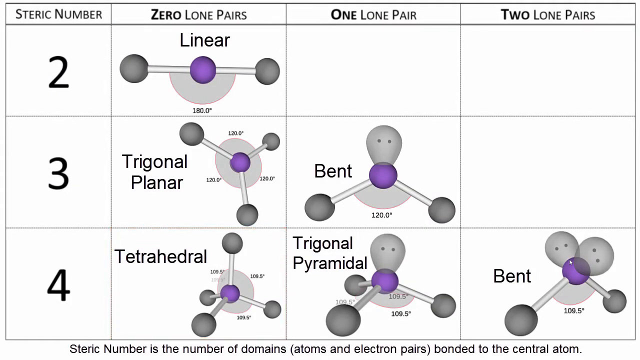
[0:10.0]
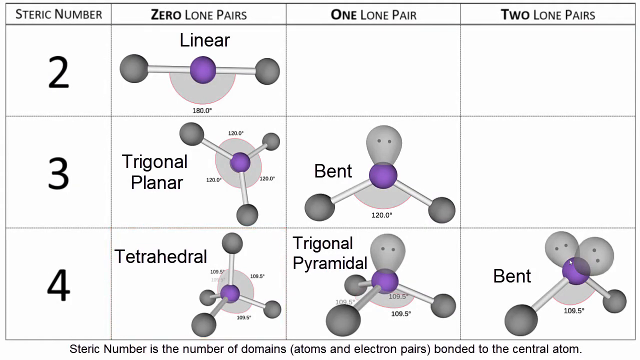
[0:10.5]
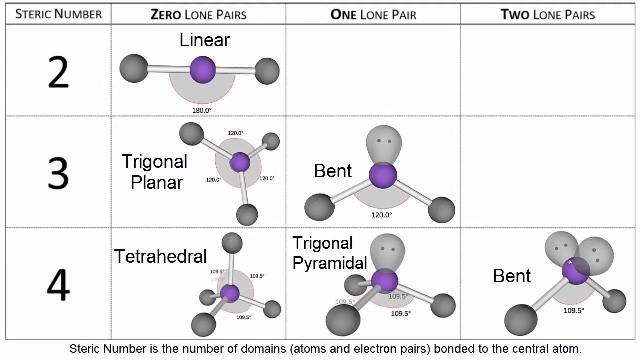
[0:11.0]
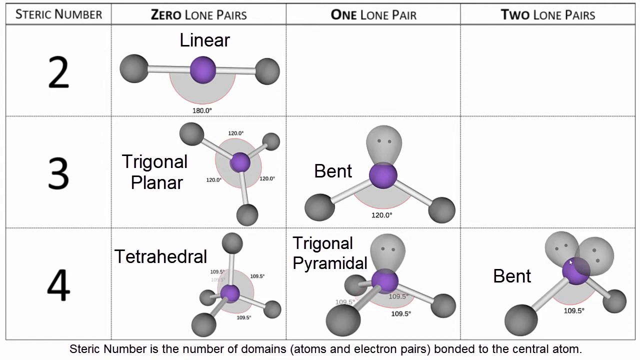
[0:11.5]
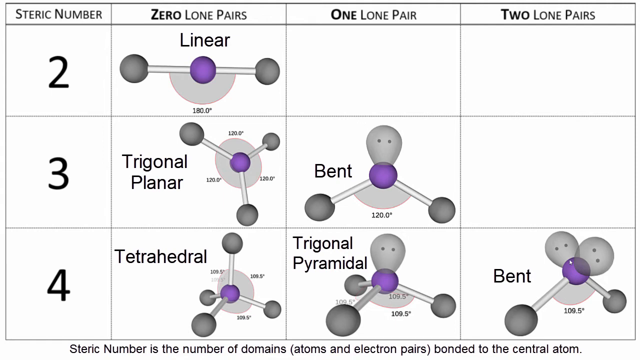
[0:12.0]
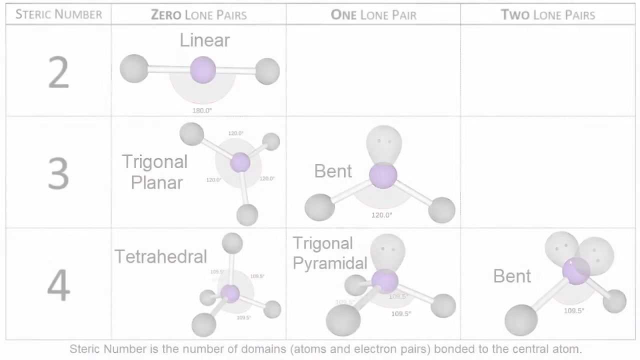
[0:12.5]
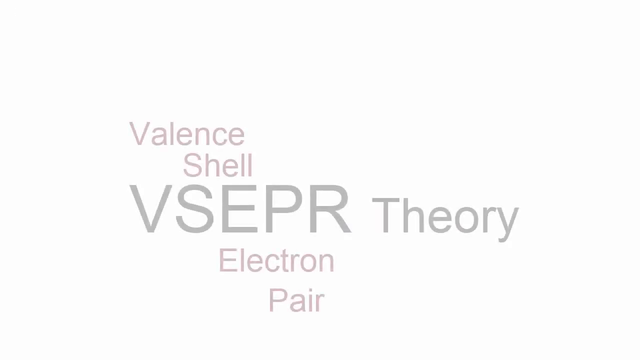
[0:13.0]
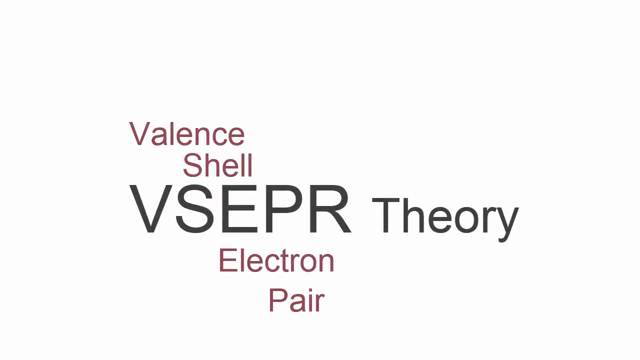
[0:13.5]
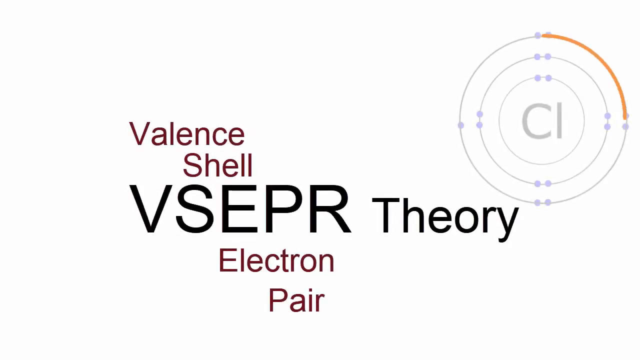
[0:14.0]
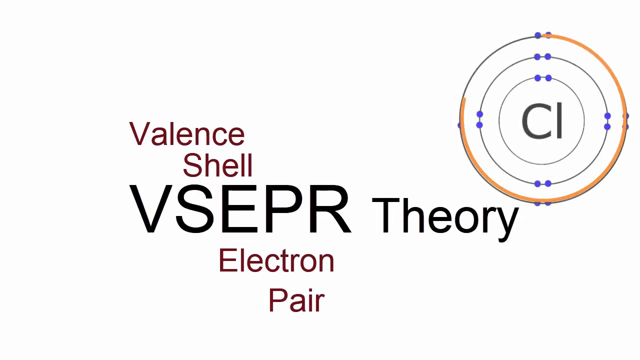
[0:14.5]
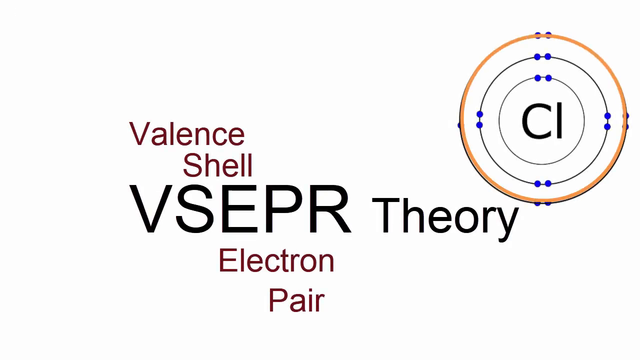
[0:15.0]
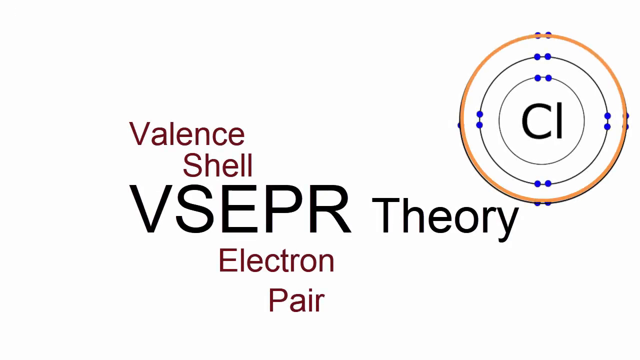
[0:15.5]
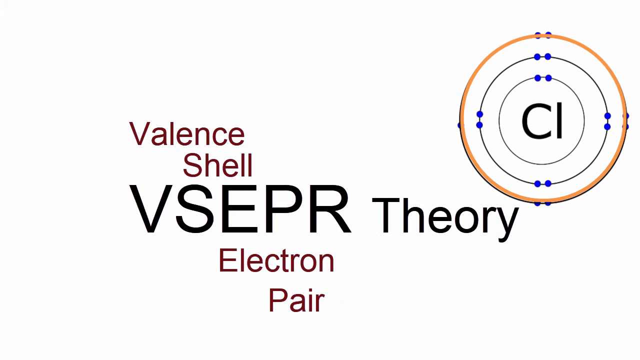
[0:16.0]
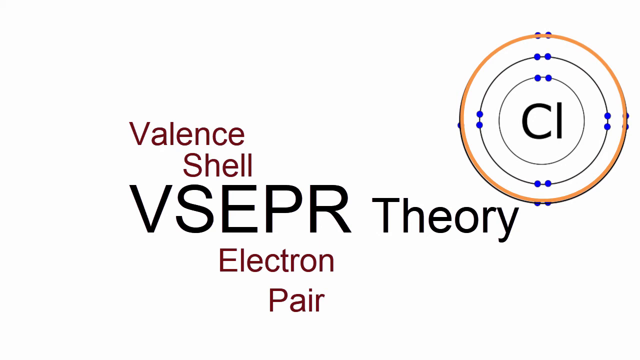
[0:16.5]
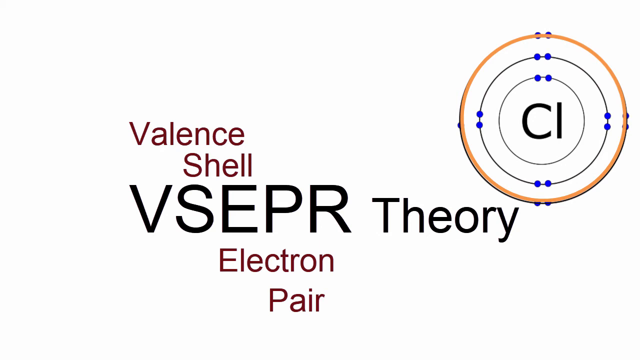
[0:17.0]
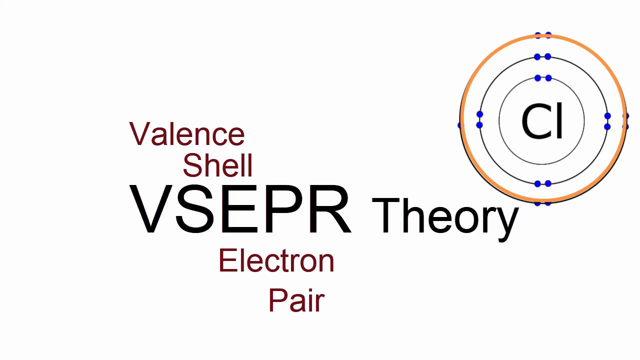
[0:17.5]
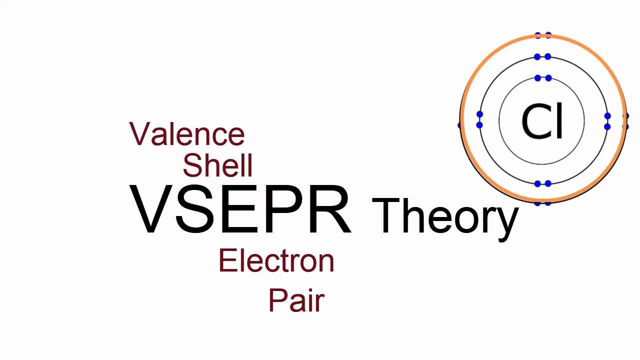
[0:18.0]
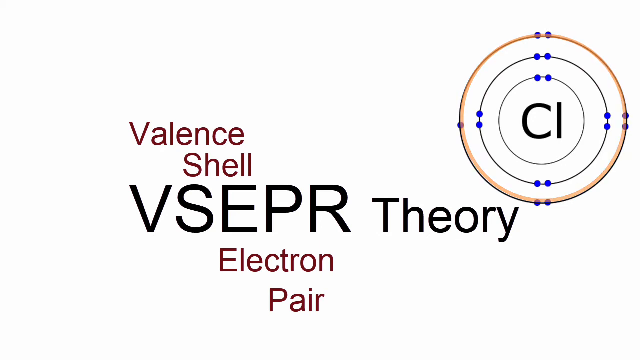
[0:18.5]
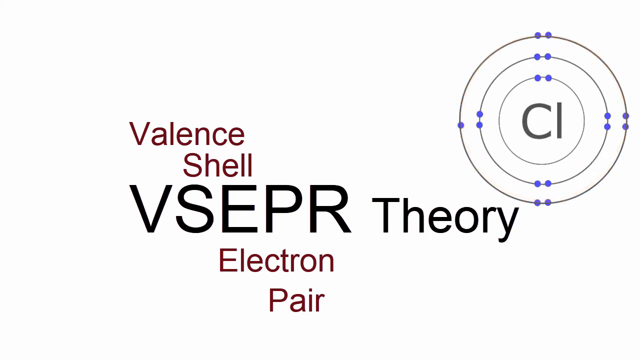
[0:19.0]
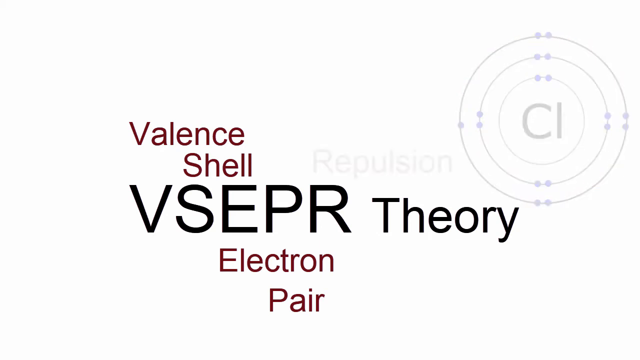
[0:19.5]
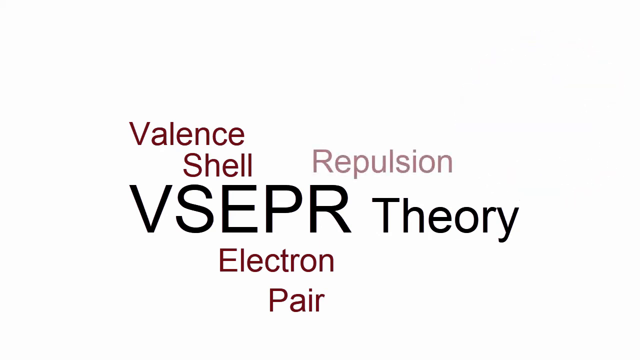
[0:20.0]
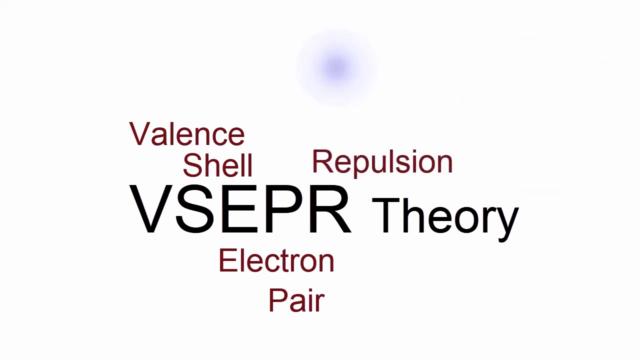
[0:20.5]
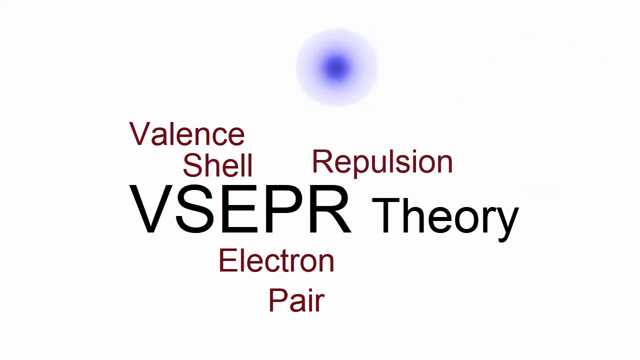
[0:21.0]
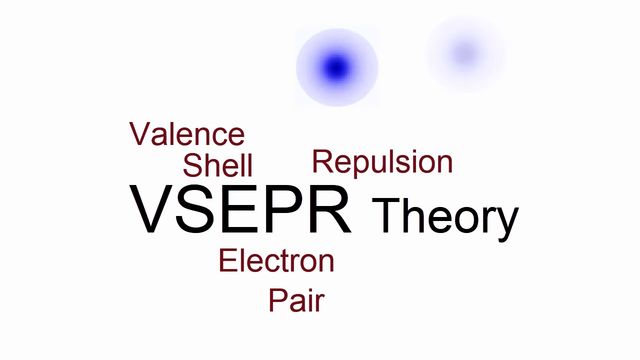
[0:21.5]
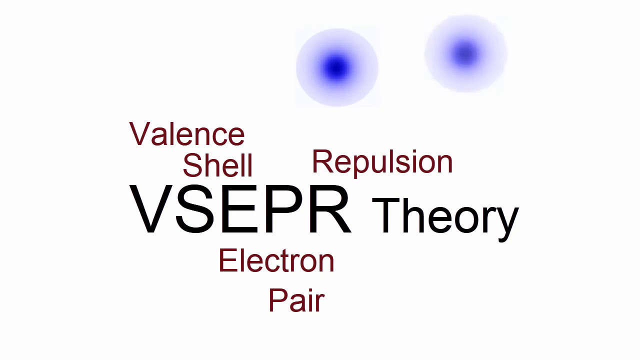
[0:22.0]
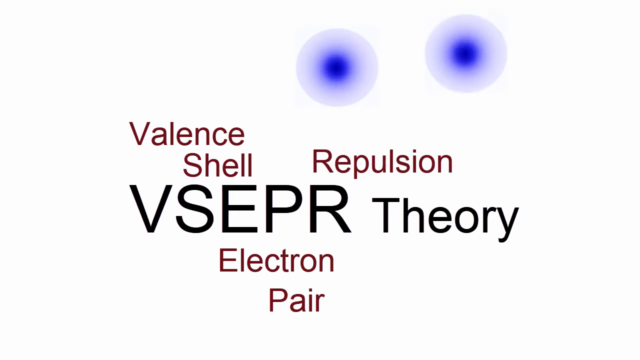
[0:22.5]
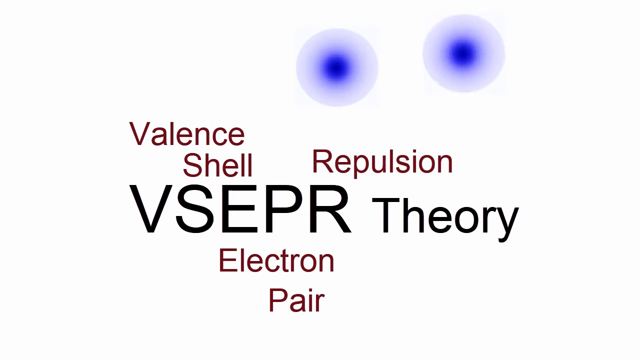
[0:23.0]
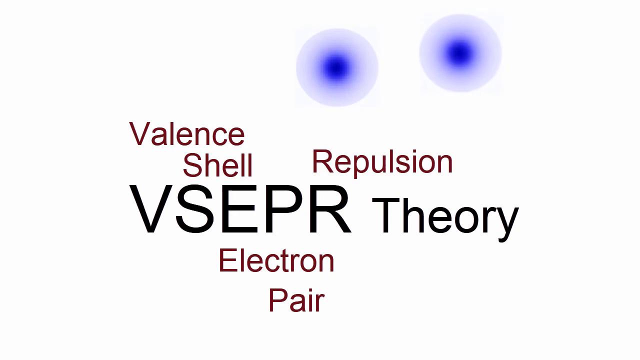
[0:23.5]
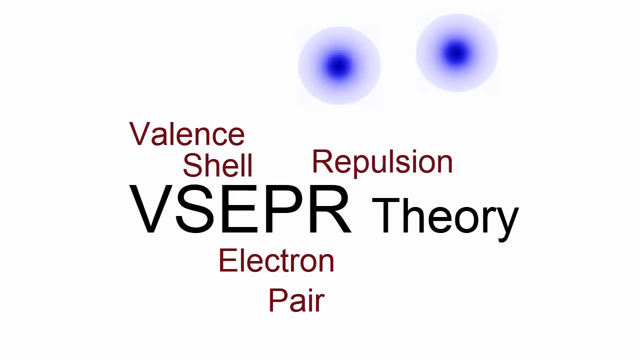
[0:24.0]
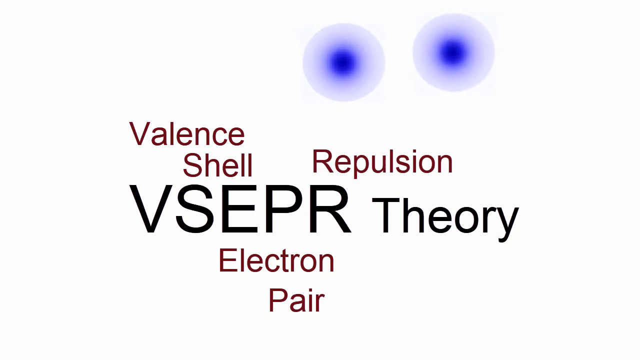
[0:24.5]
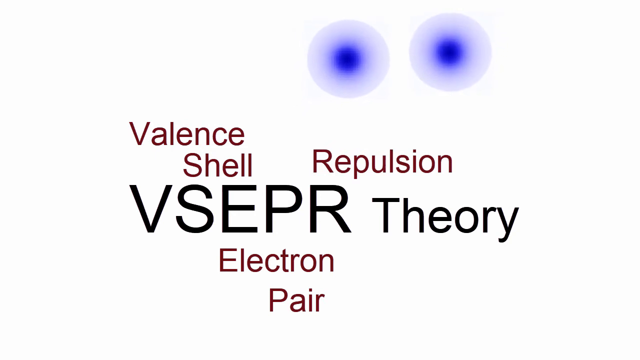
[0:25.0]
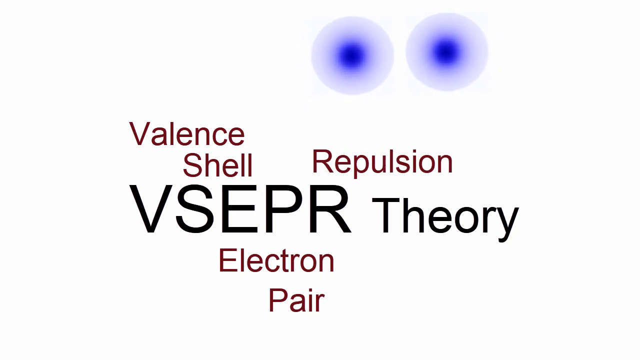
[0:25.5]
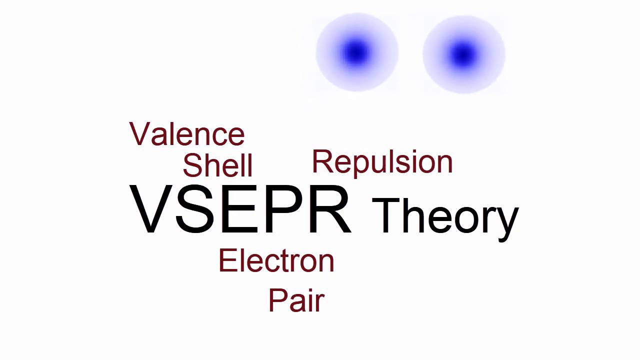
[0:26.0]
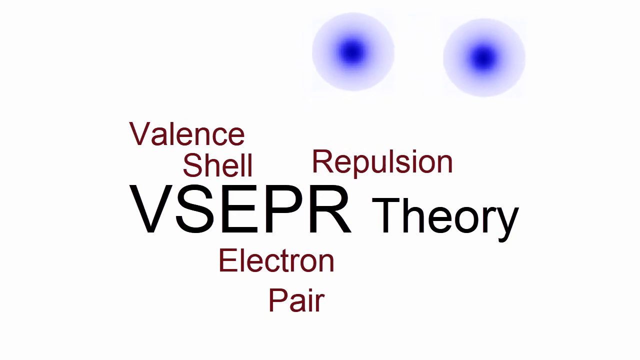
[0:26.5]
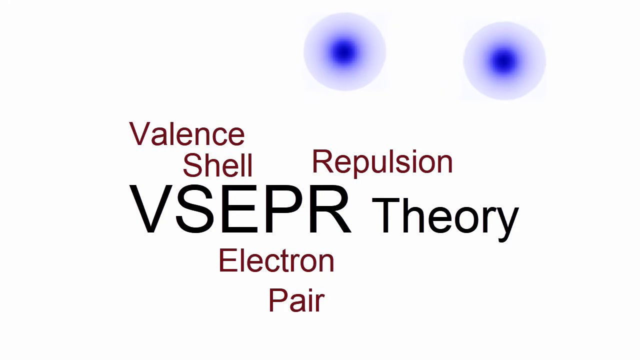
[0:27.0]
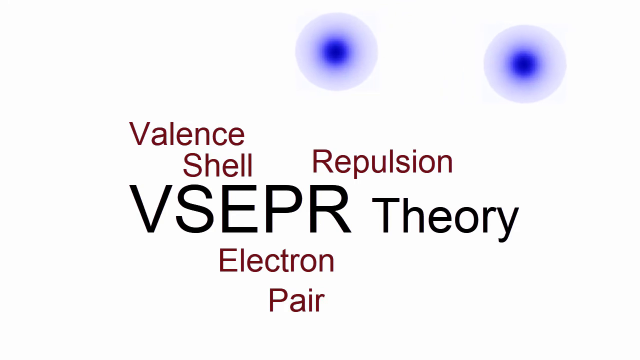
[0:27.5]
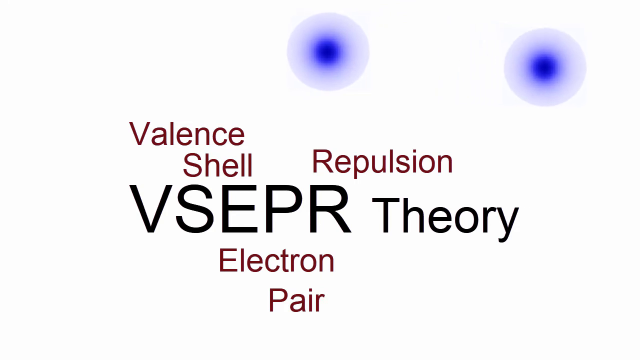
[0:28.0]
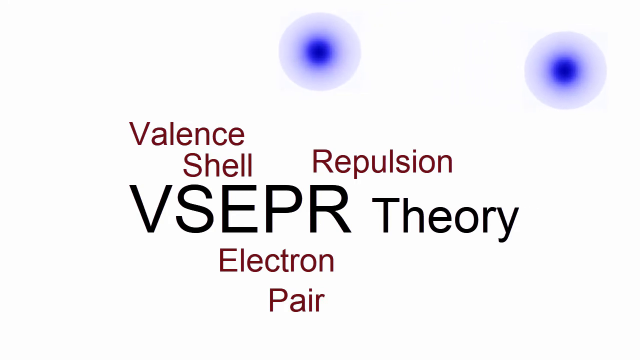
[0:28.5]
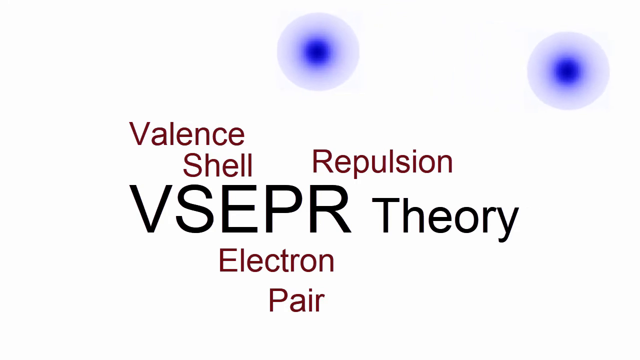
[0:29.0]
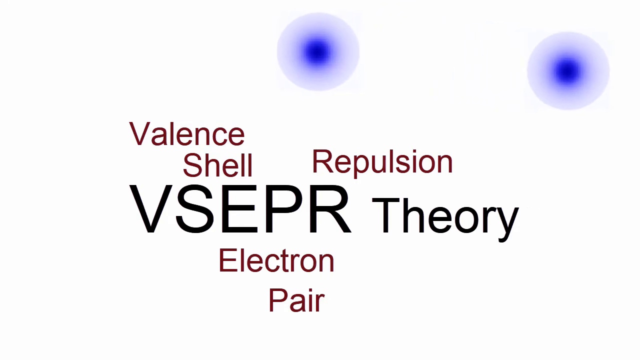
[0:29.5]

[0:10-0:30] The table of steric numbers and arrangements of bonds and electron pairs is on screen before a transition to a subheading slide focused on VSEPR theory. In the upper right corner, a chlorine atom is drawn as a Bohr model, and its outer valence shell is highlighted in orange, apparently to illustrate what a valence shell is. The chlorine atom fades away and is replaced by two blue balls representing atoms; they are dark blue on the inside and fade to a lighter blue along the edge. The two balls draw closer to each other, then strongly bounce away, demonstrating repulsion.